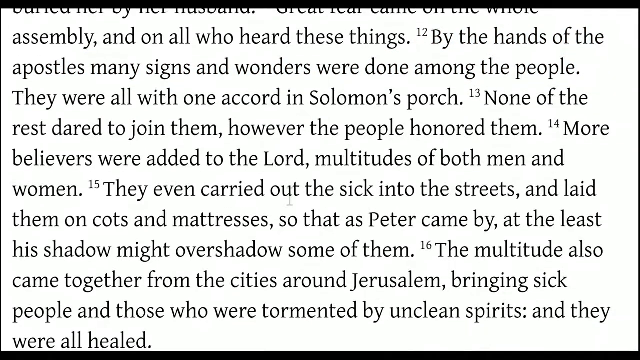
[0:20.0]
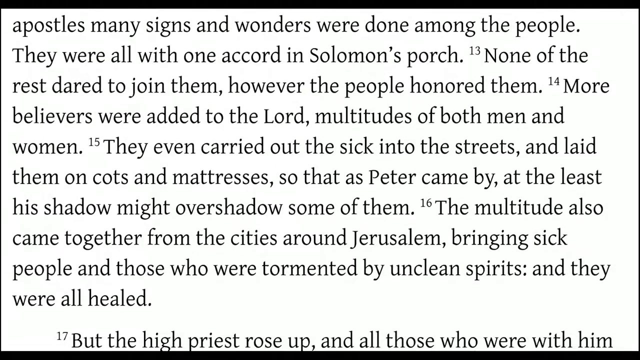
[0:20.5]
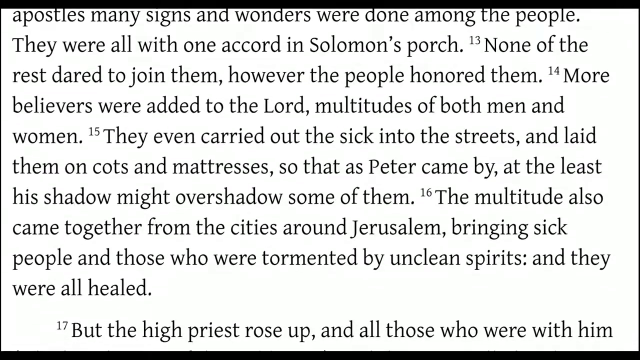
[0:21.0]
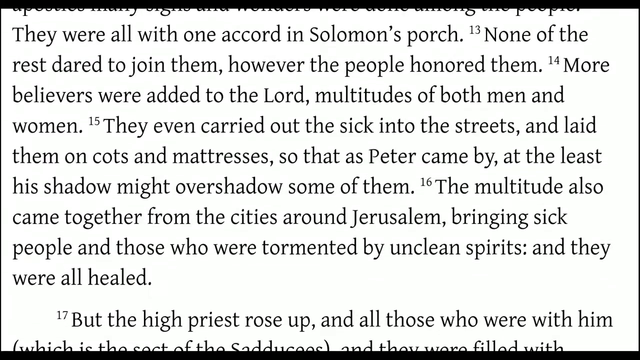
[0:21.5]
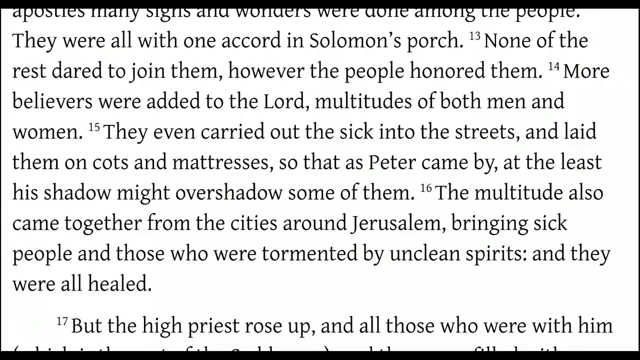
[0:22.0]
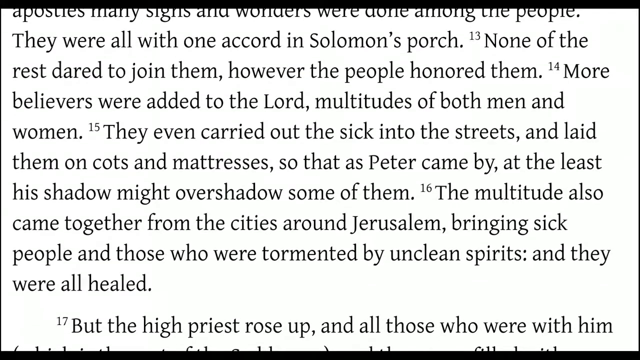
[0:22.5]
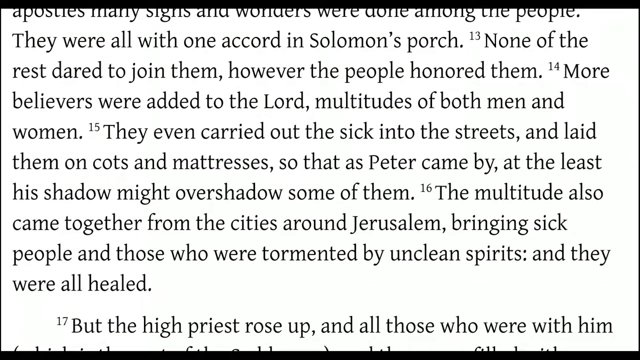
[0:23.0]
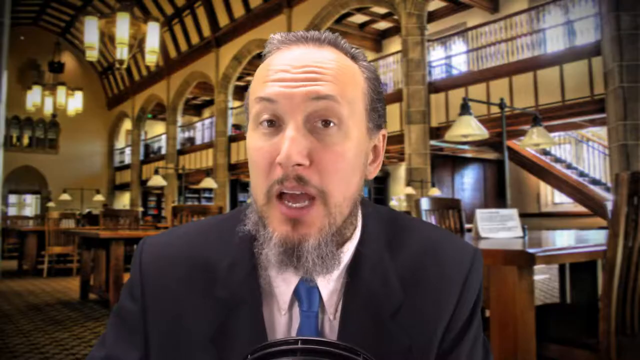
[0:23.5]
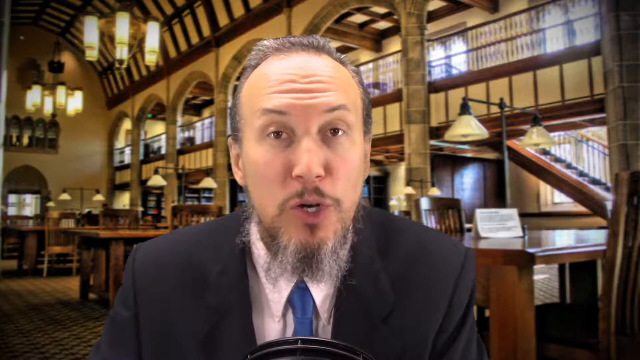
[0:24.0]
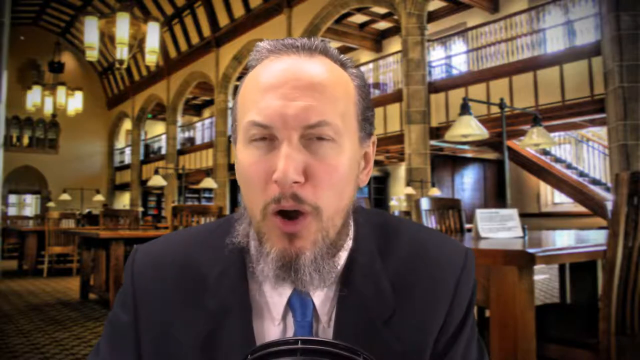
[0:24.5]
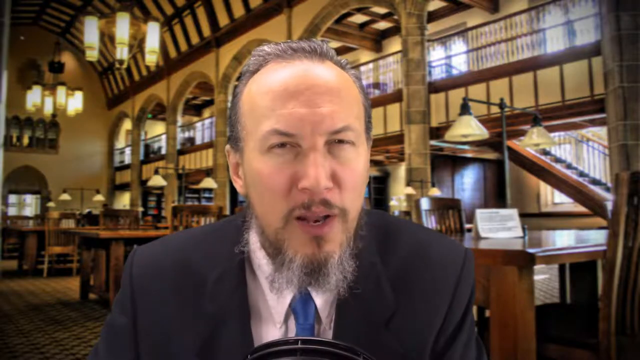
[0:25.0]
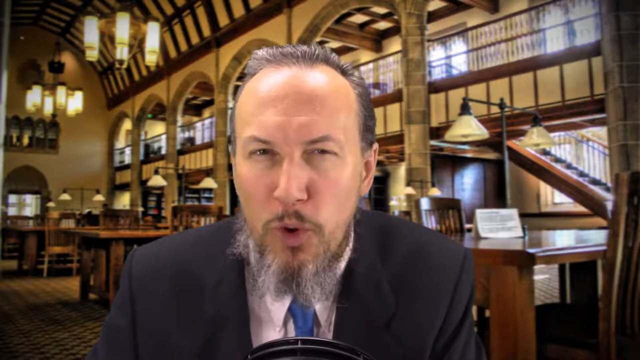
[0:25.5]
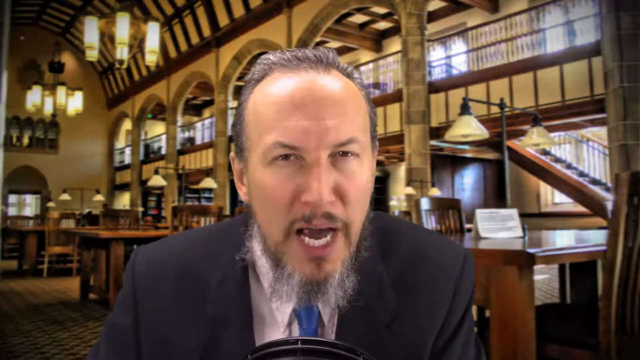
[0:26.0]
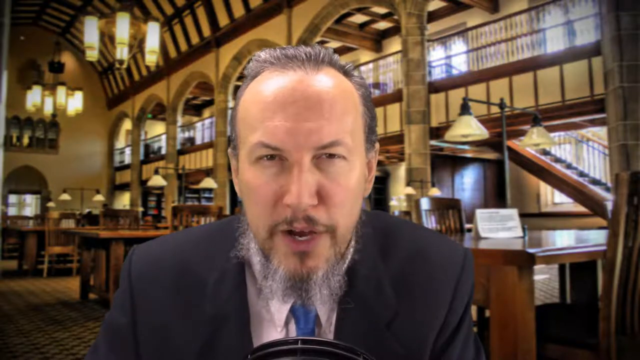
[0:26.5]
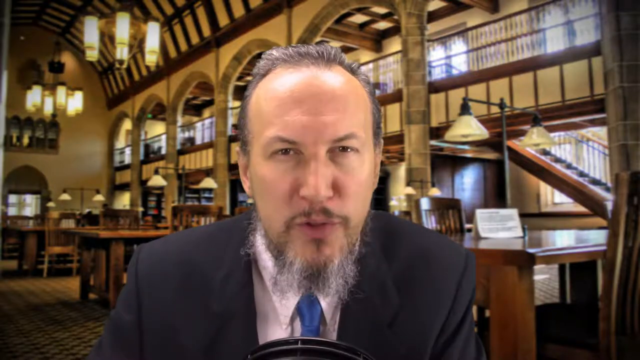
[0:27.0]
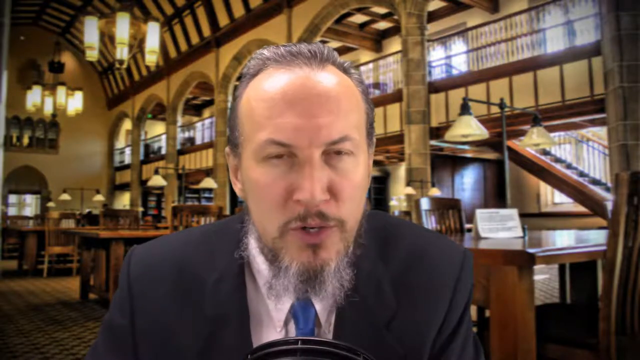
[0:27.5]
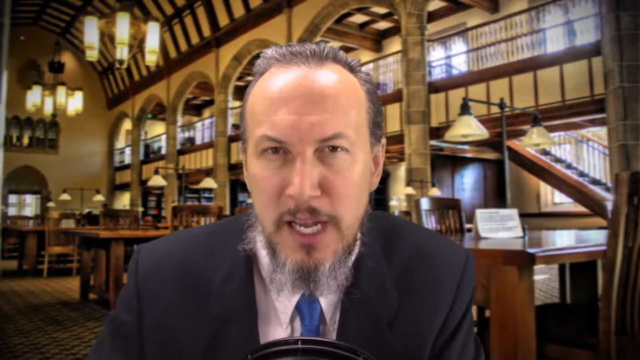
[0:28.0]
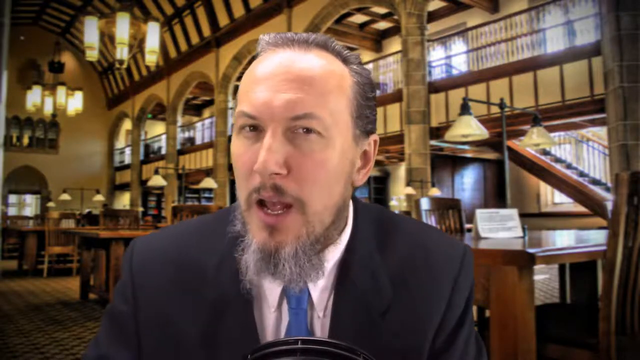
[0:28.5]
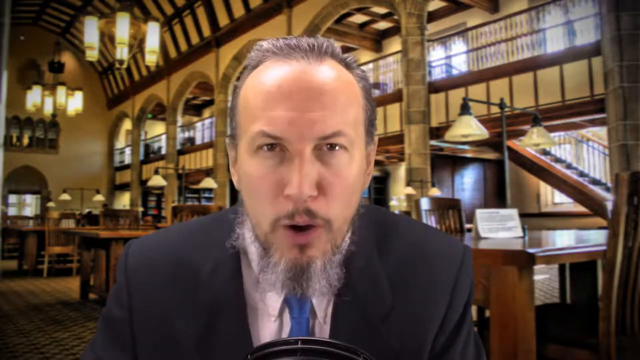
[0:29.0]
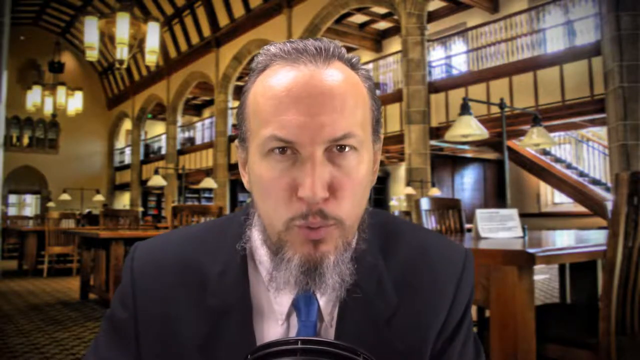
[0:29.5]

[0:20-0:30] A close-up shows a few paragraphs from a book in black text on a white background. The words read, "assembly on all who heard these things, by the hands of the apostles many signs and wonders were done among the people. They were all with one accord in Solomon's porch." There are footnotes throughout the paragraph; for example, 14 reads, "more believers were added to the Lord, multitudes of both men and women." The text scrolls downward just a bit, revealing two more lines. The scene then cuts back to the same man in the library setting. He talks with a very intense look on his face, his head moving slightly left to right, and he seems to narrow his eyes. He is Caucasian, with slicked-back salt-and-pepper hair, a rather long, scraggly beard that is primarily gray, and a goatee and mustache.